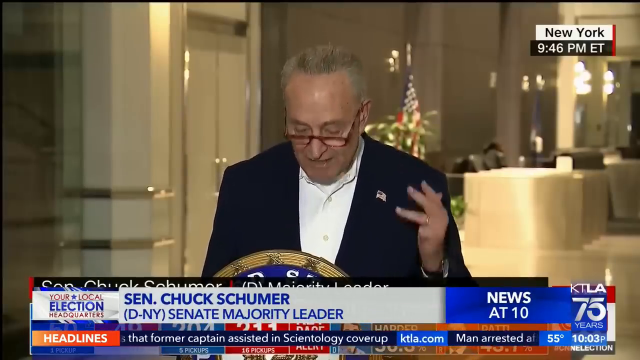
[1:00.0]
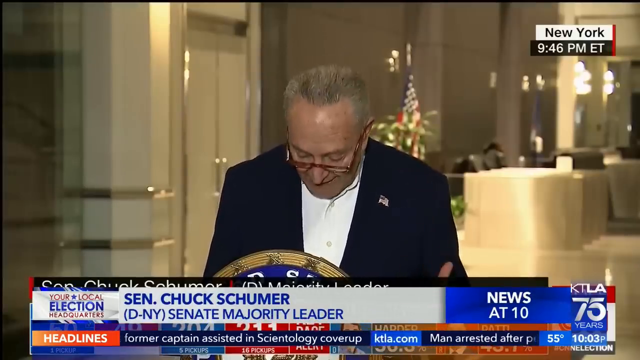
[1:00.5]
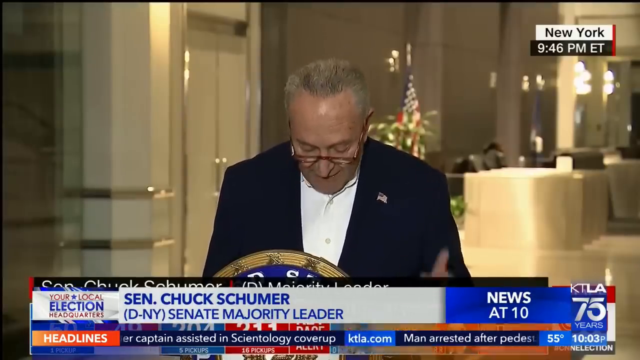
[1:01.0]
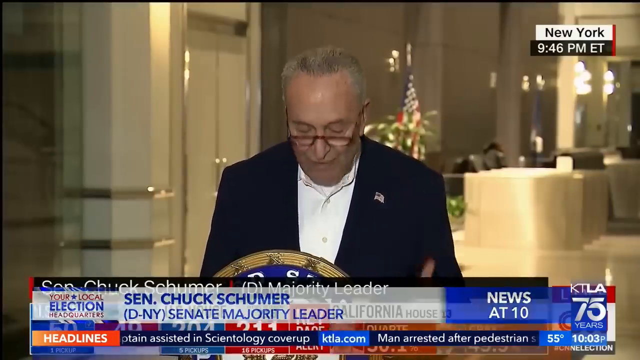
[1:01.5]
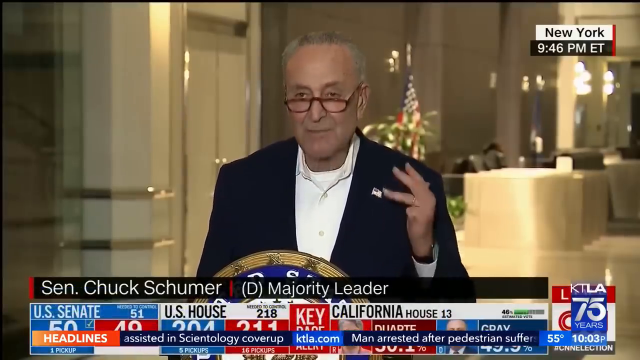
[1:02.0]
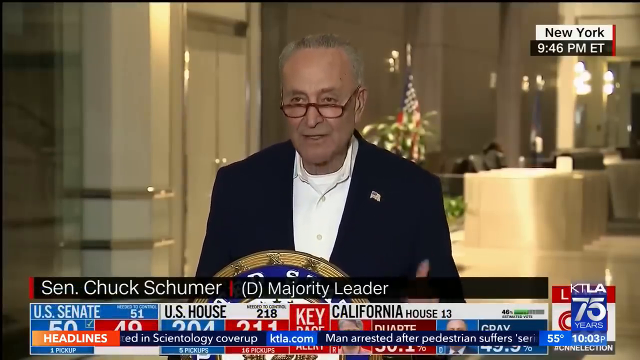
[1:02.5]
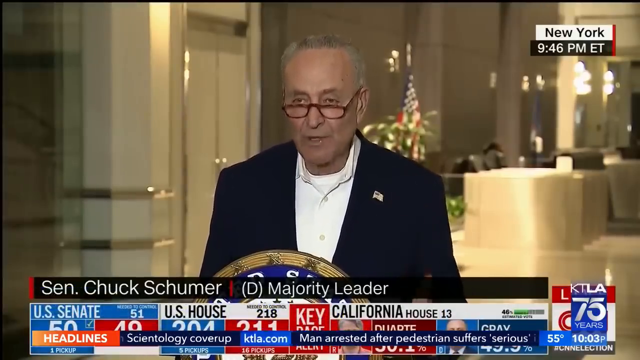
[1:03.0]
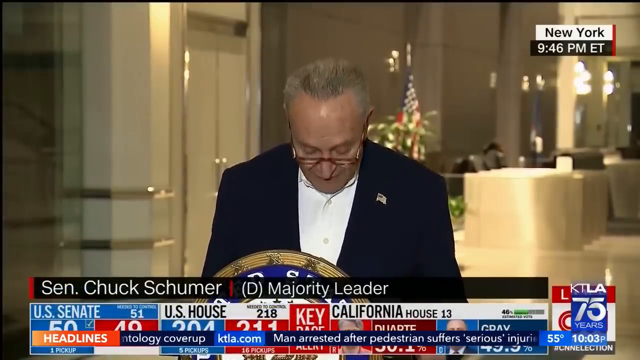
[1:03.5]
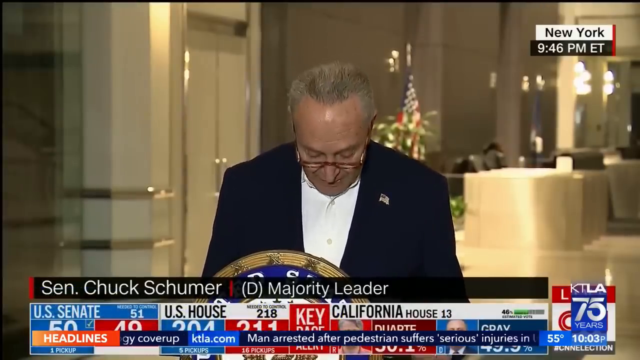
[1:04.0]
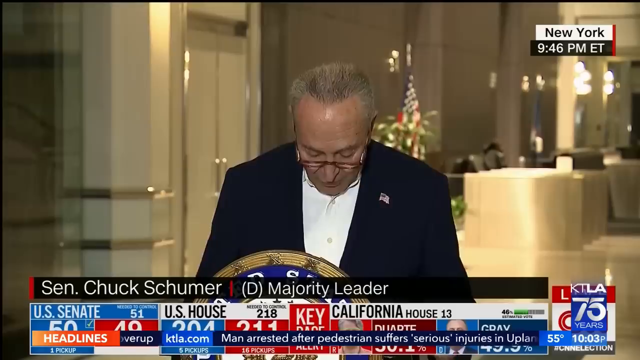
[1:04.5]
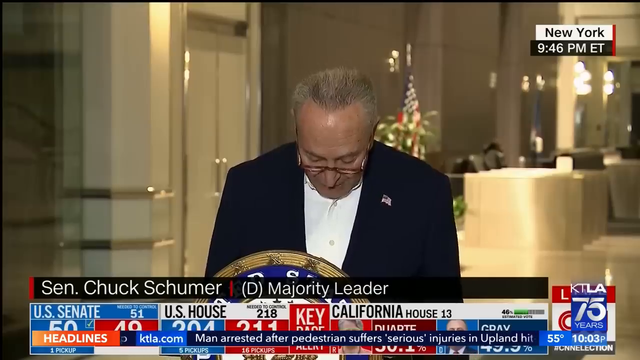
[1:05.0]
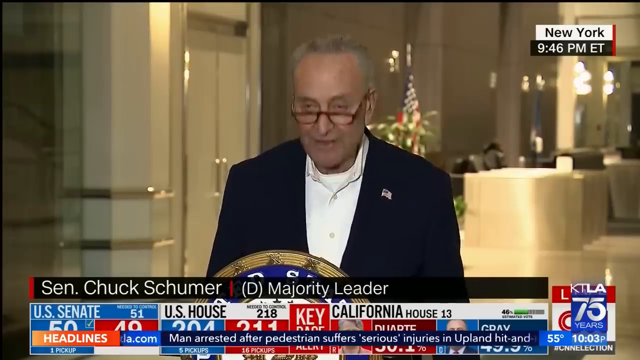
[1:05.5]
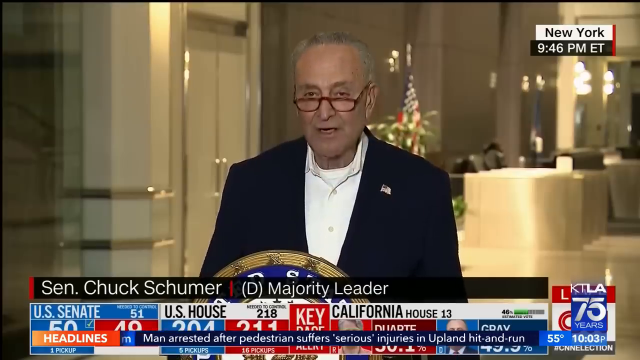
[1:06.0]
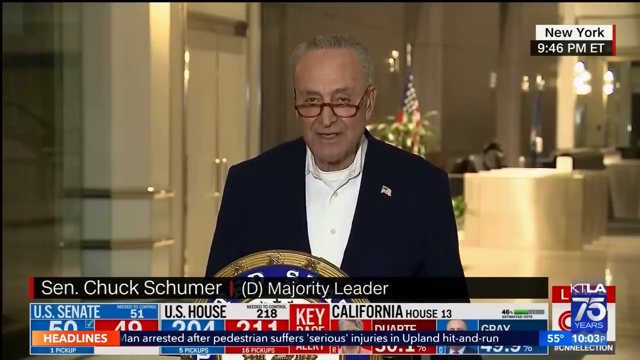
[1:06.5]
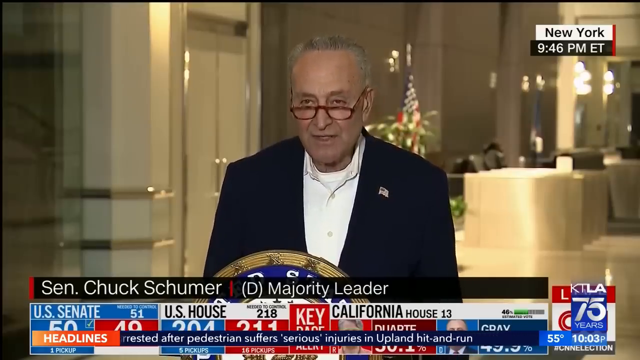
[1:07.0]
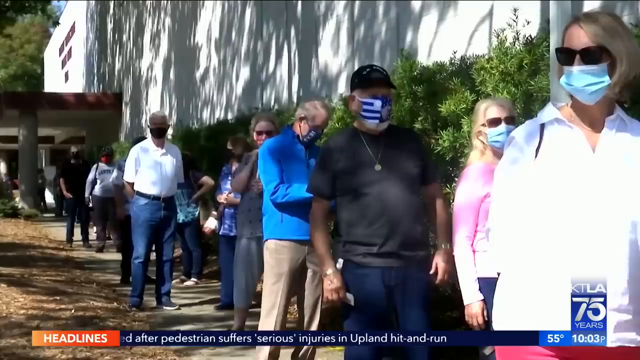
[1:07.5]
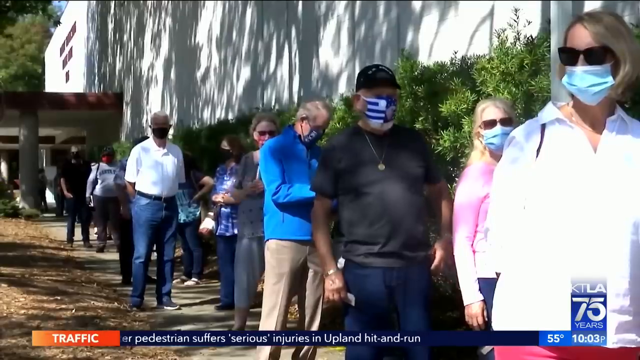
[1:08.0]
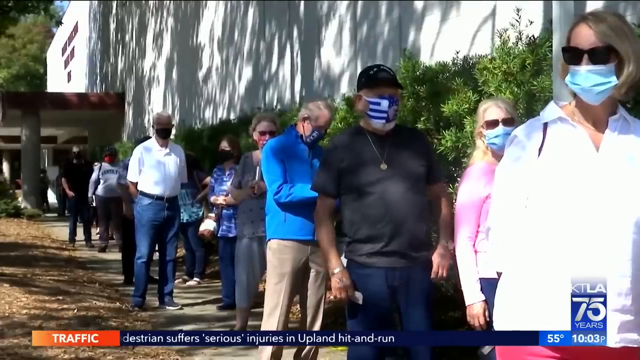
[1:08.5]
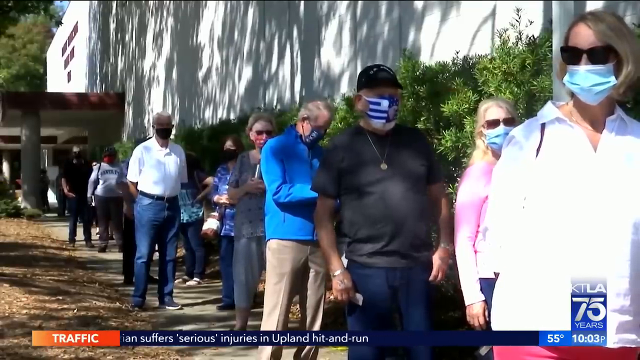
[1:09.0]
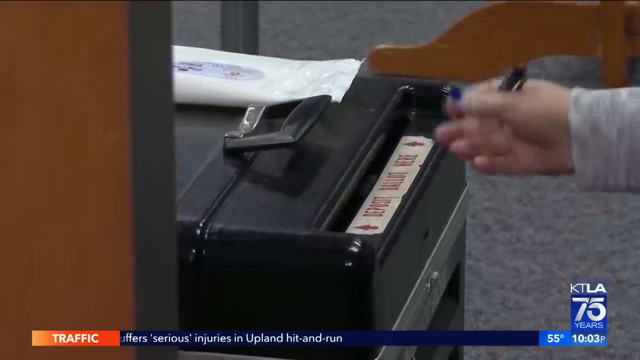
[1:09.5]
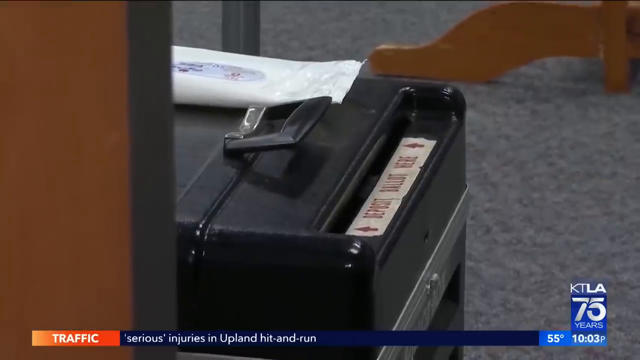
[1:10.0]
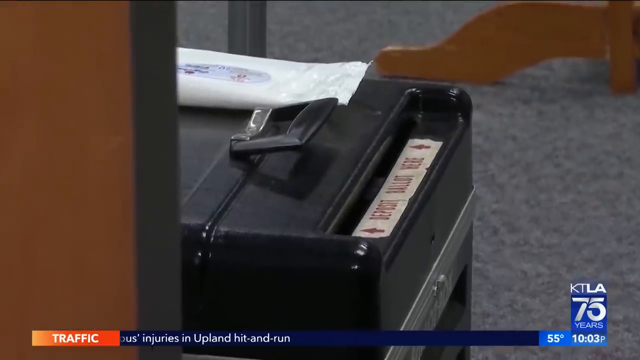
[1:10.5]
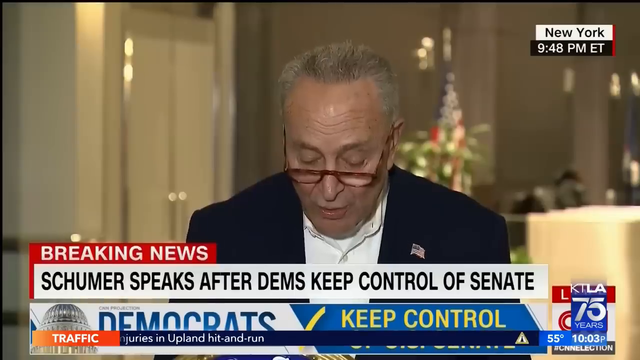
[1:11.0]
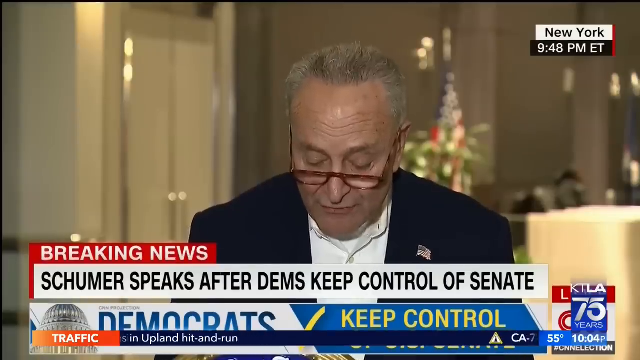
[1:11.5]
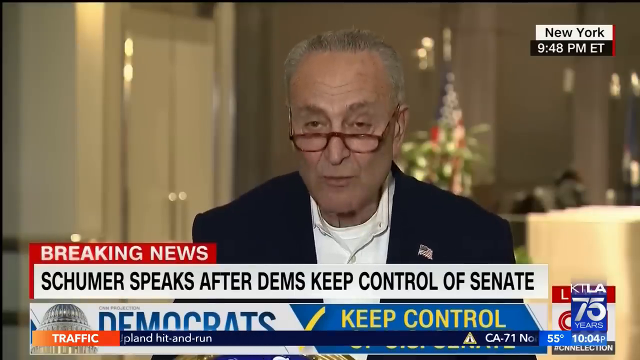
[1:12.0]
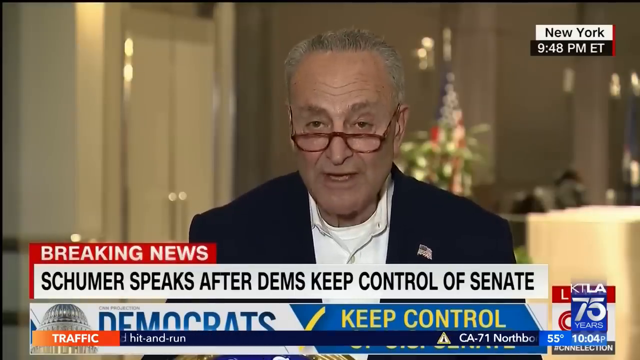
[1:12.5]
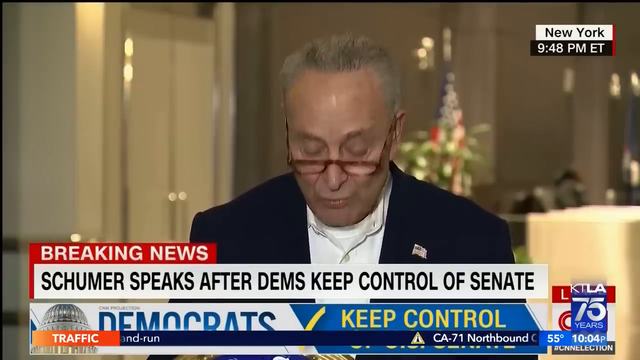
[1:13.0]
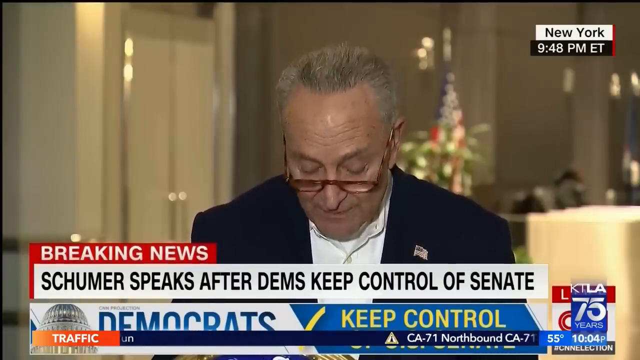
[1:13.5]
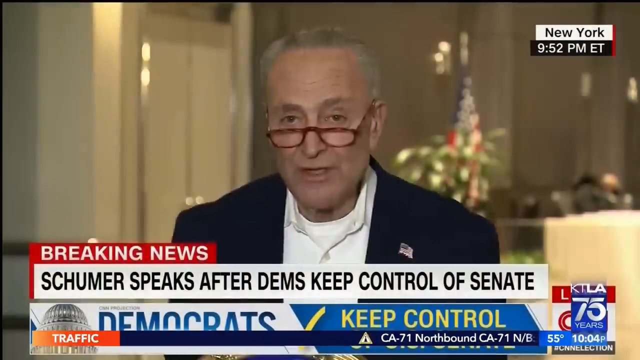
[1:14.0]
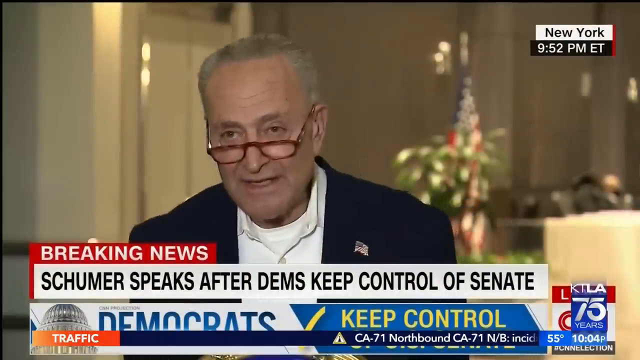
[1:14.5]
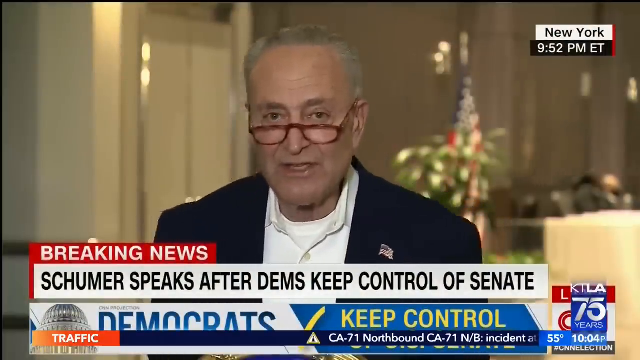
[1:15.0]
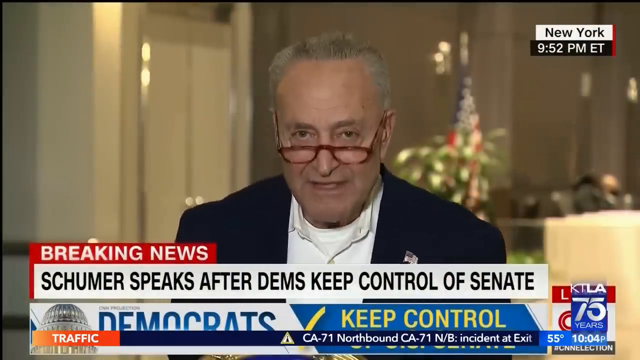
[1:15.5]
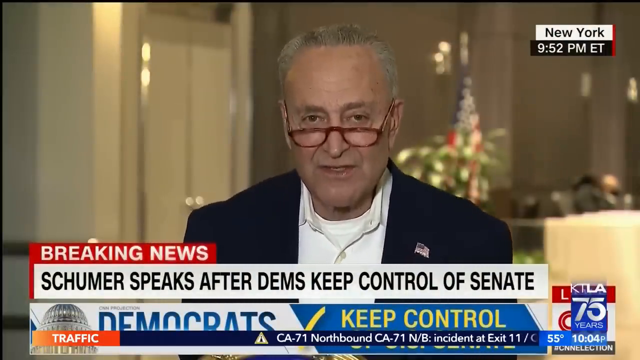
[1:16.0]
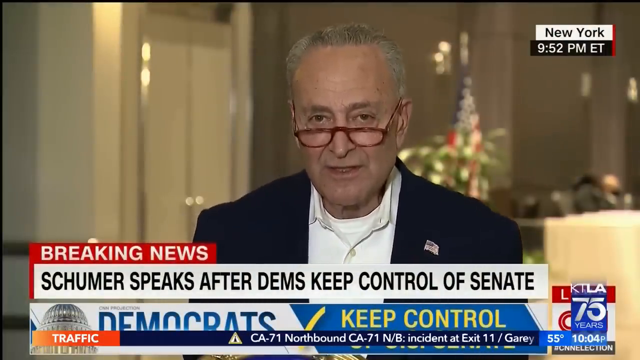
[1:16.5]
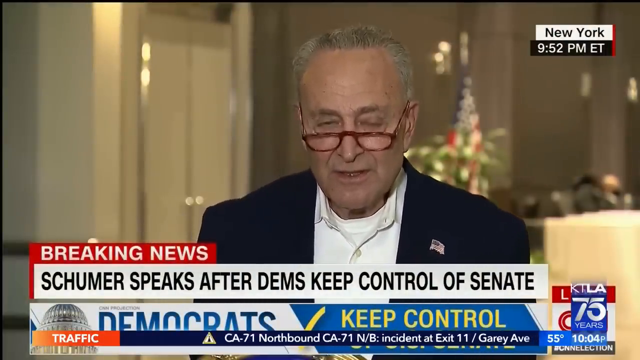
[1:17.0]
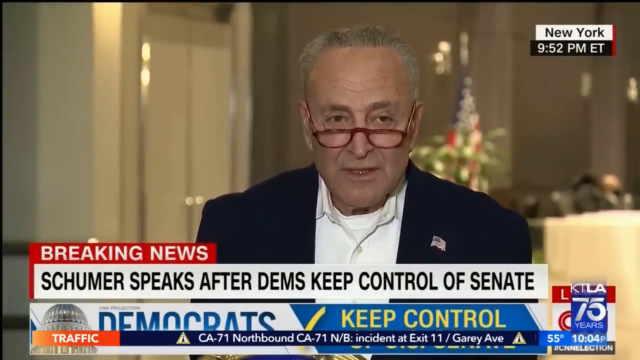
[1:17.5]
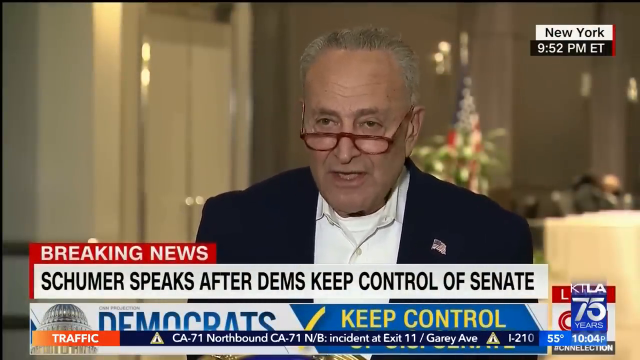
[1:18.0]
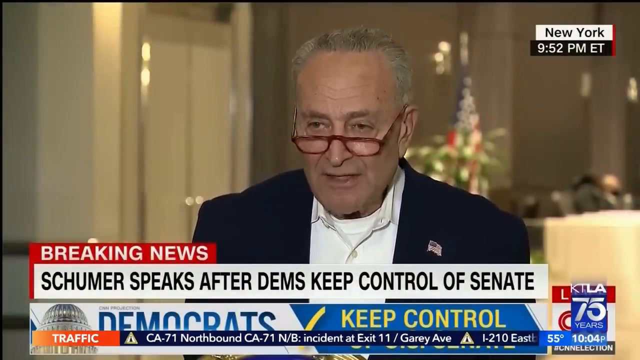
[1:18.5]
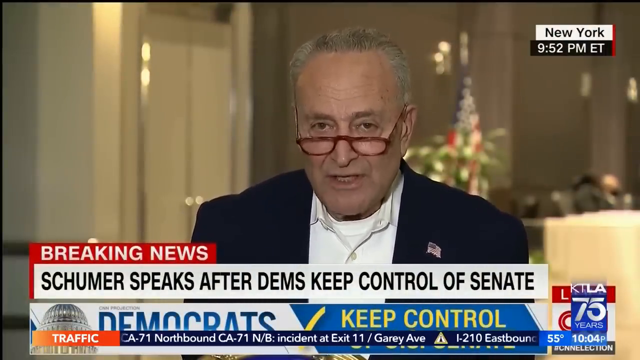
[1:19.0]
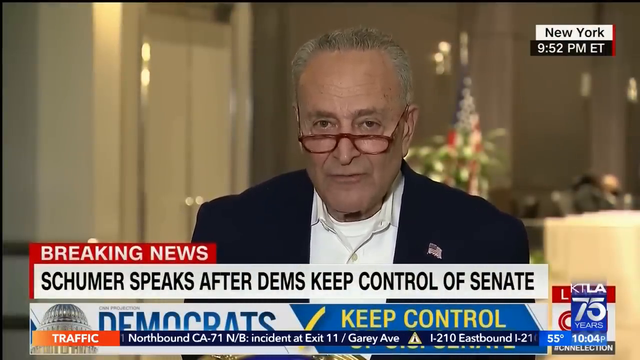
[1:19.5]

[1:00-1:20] Chuck Schumer speaks, with the text "Schumer speaks after Dems keep control of Senate". A New York time of 9:52 p.m. Eastern Standard appears. The footage cuts to people standing in line wearing masks, then back to Schumer speaking. The coverage alternates between Schumer and what are probably various voters still waiting in line, and there seems to be a shot of somebody putting a ballot into a ballot box. Schumer is probably speaking from a podium; where he is speaking is unclear.